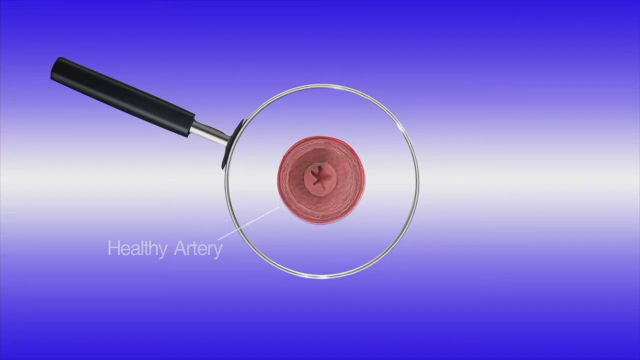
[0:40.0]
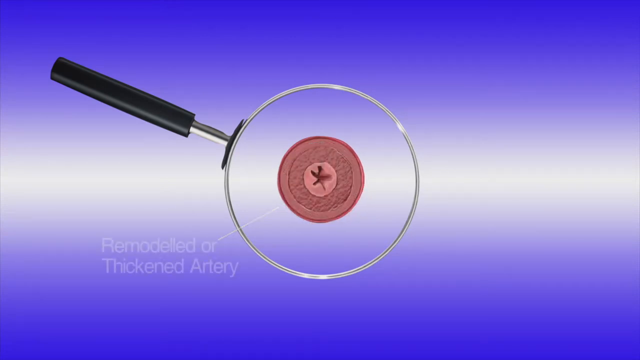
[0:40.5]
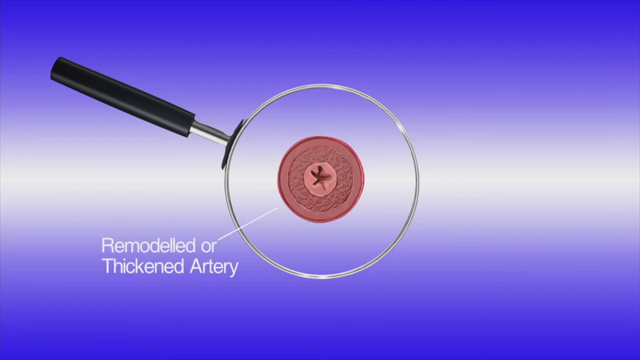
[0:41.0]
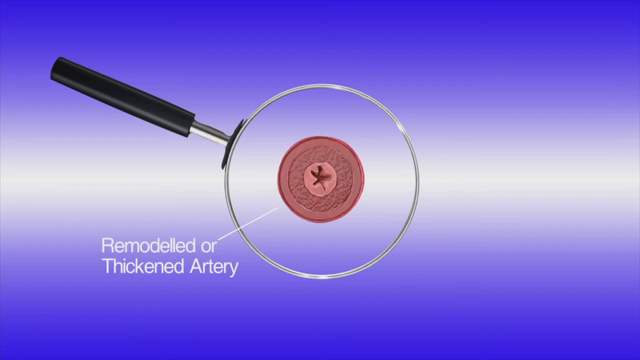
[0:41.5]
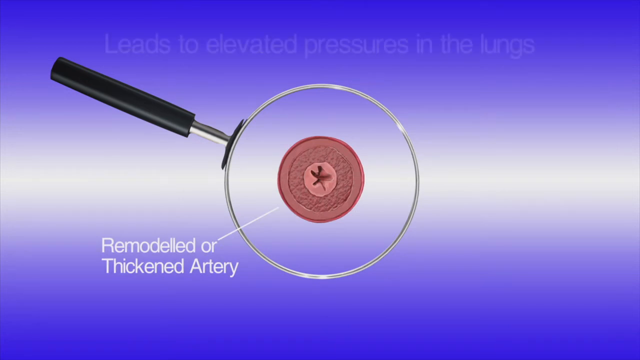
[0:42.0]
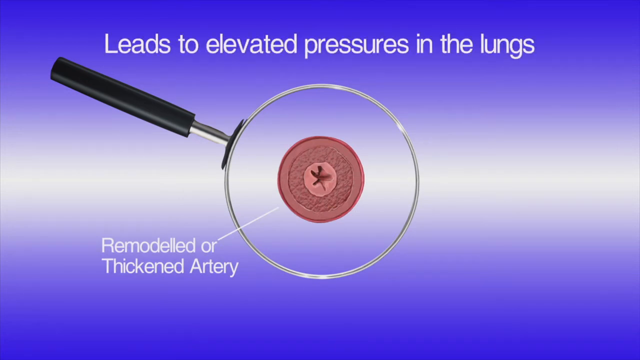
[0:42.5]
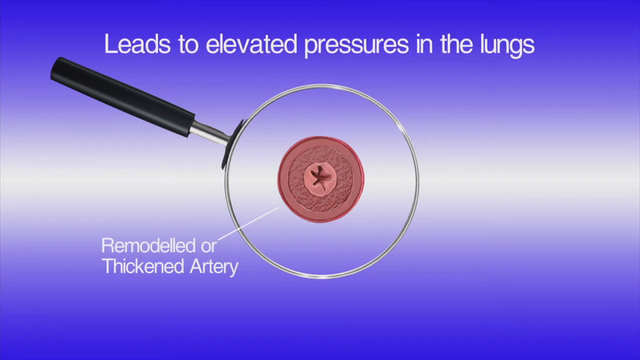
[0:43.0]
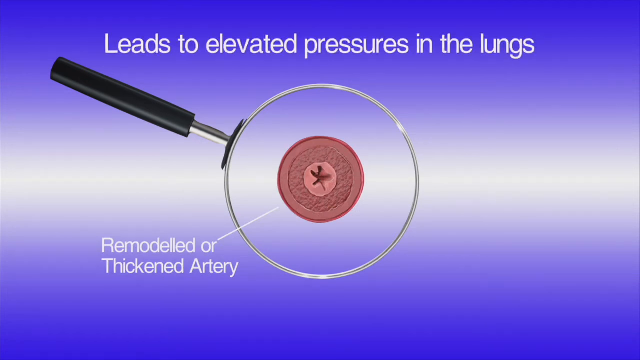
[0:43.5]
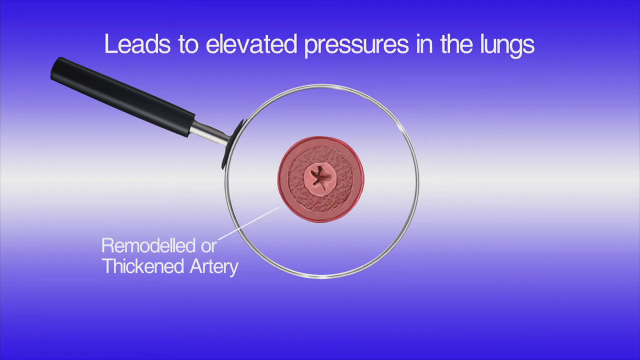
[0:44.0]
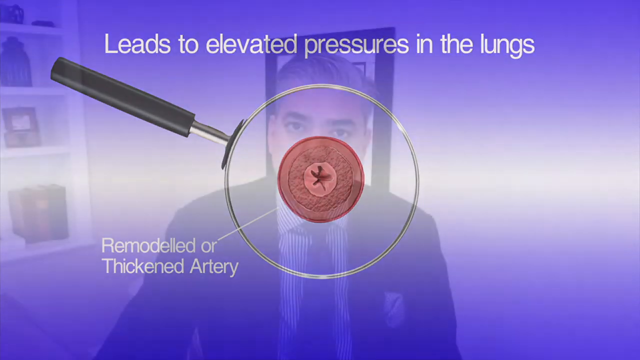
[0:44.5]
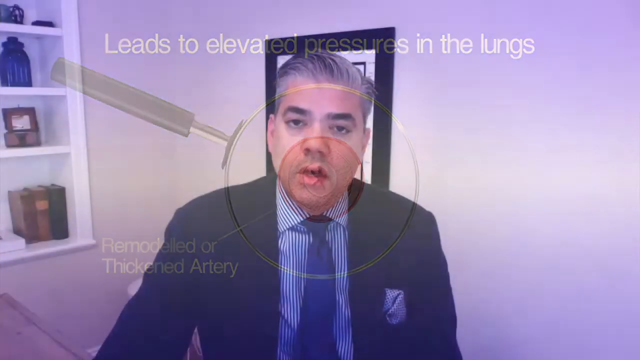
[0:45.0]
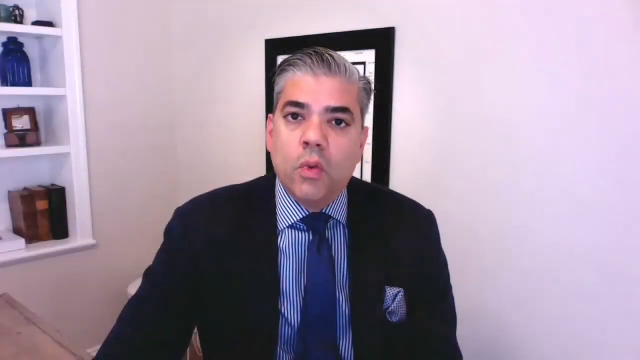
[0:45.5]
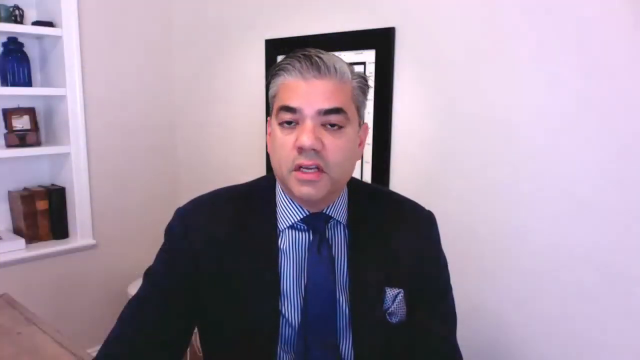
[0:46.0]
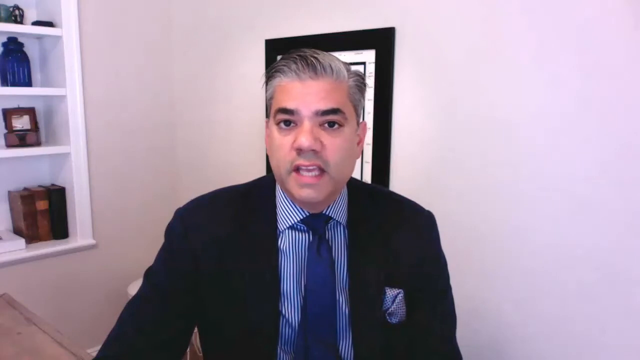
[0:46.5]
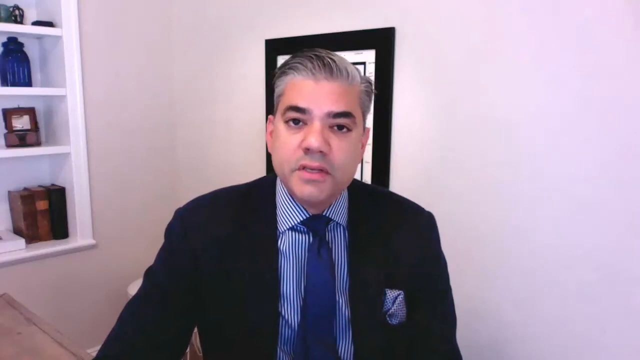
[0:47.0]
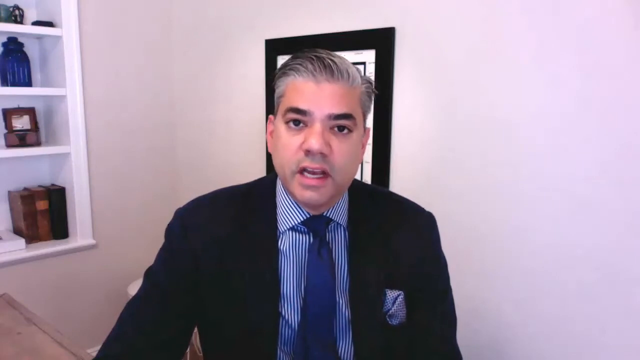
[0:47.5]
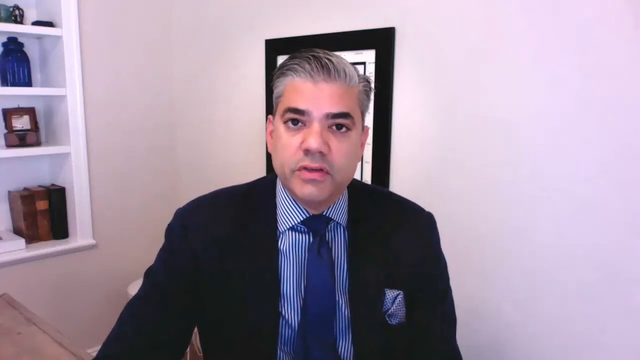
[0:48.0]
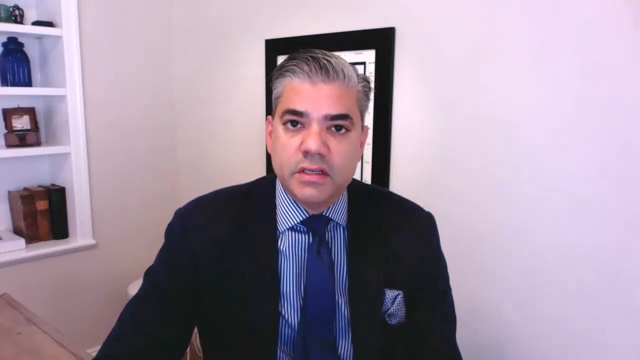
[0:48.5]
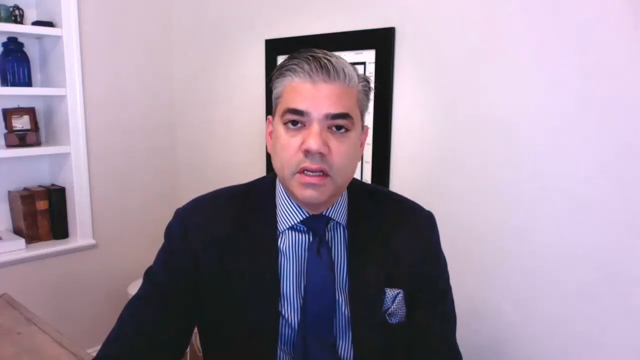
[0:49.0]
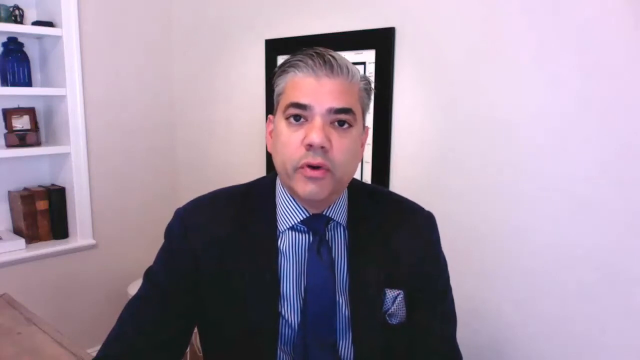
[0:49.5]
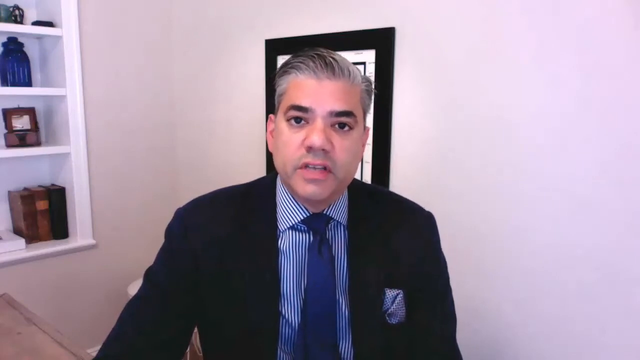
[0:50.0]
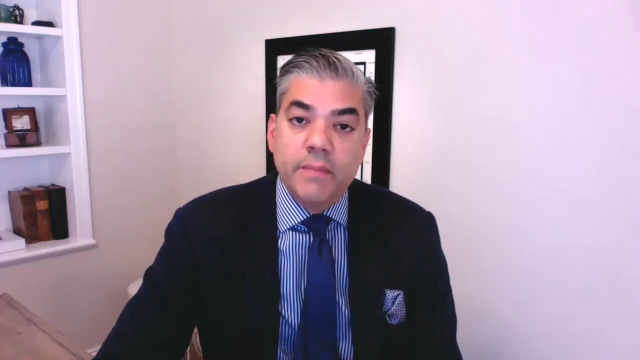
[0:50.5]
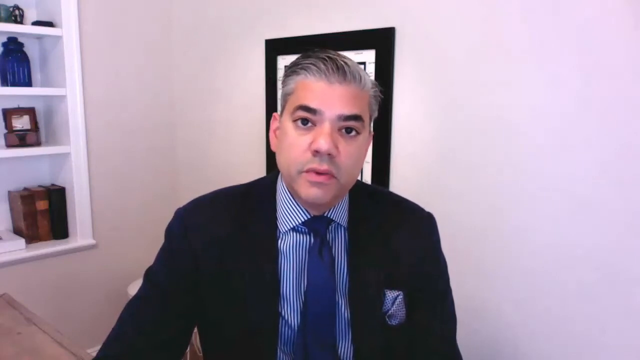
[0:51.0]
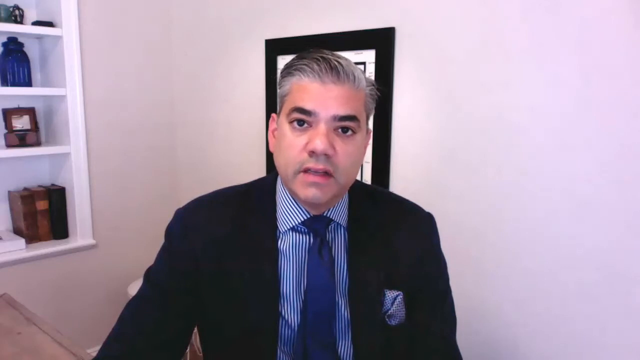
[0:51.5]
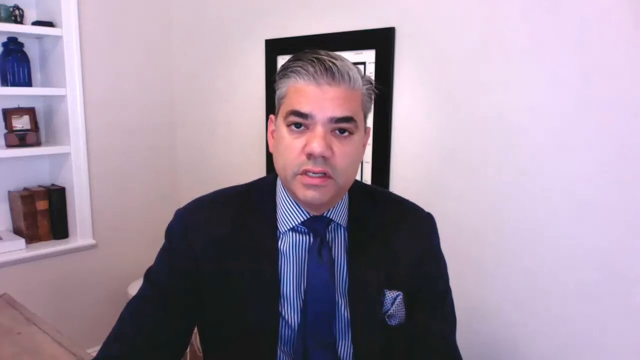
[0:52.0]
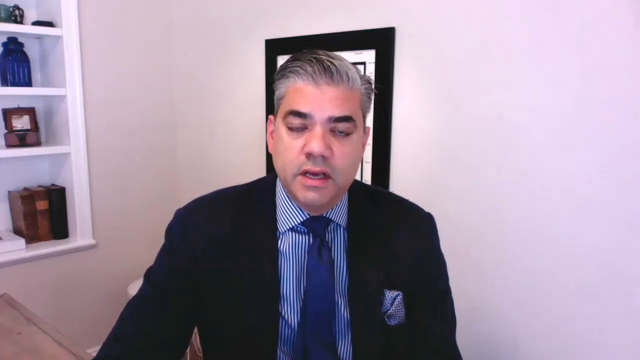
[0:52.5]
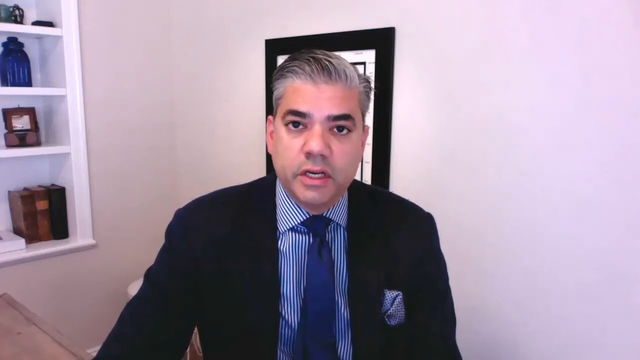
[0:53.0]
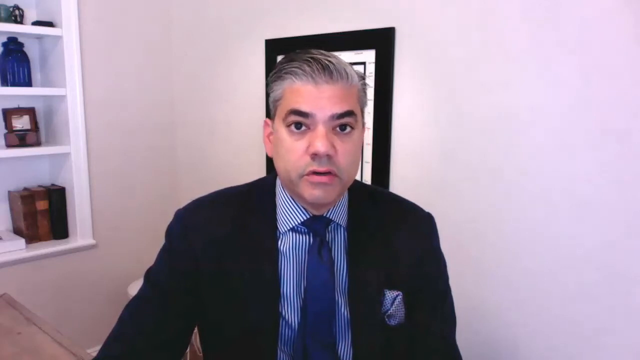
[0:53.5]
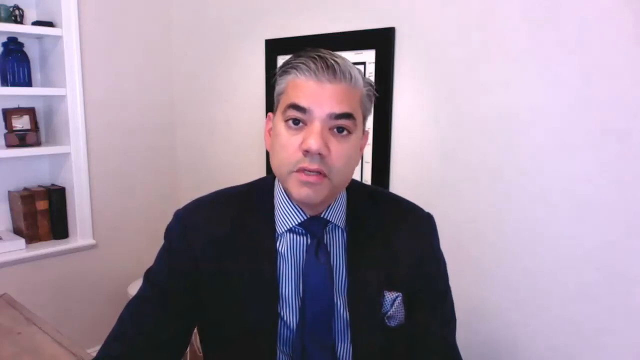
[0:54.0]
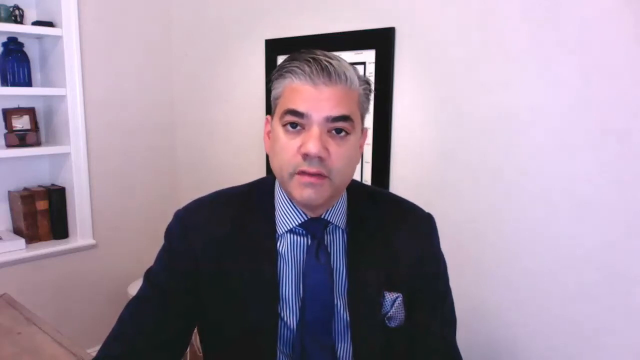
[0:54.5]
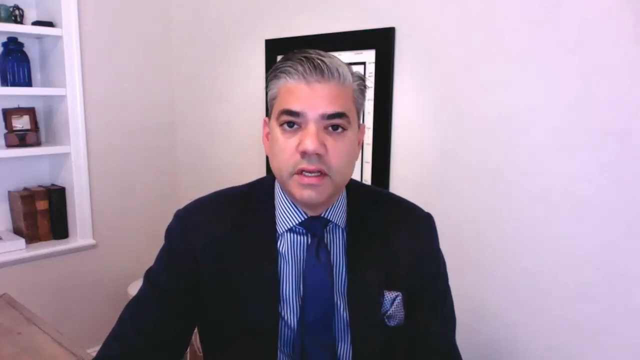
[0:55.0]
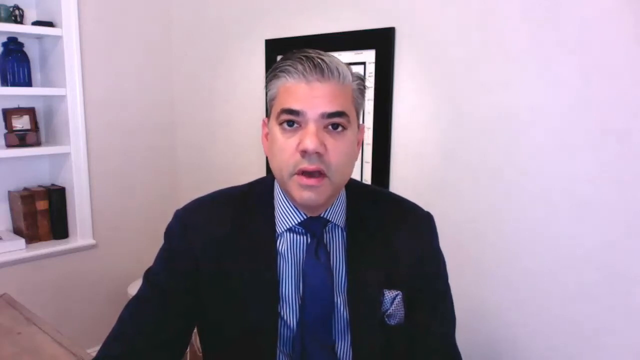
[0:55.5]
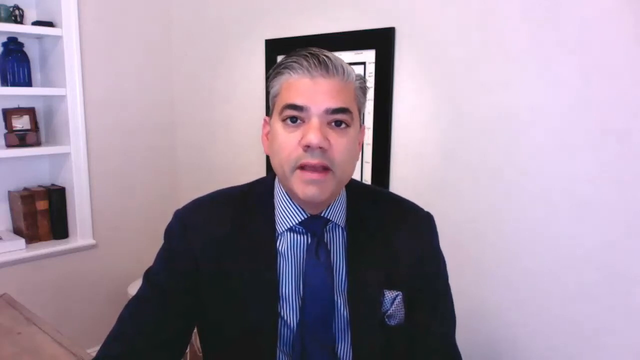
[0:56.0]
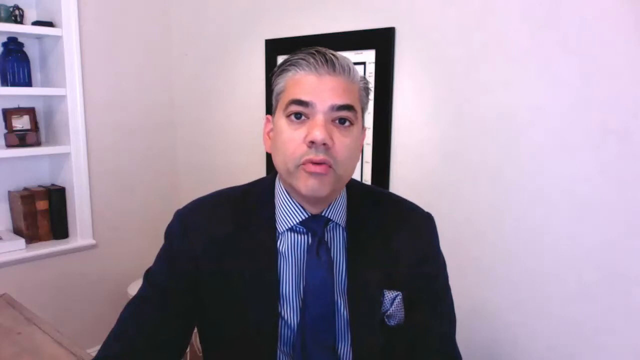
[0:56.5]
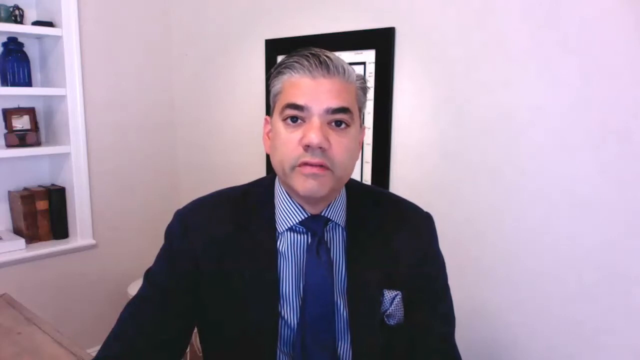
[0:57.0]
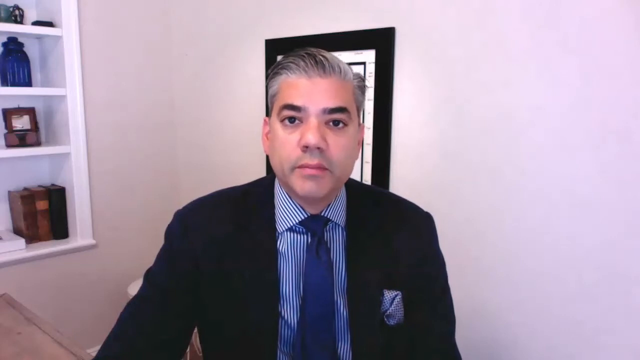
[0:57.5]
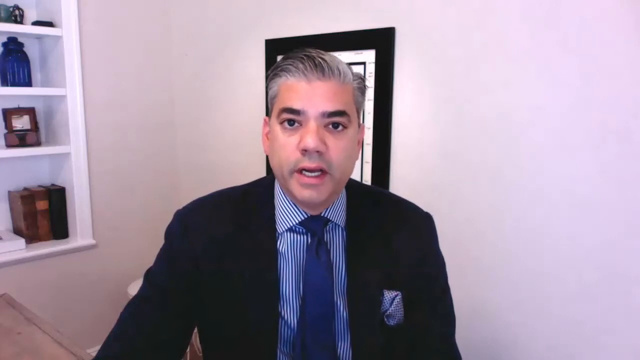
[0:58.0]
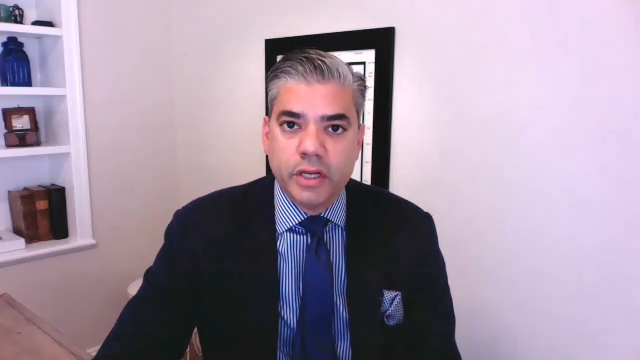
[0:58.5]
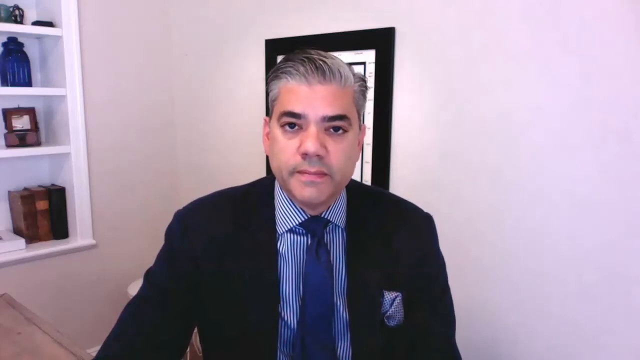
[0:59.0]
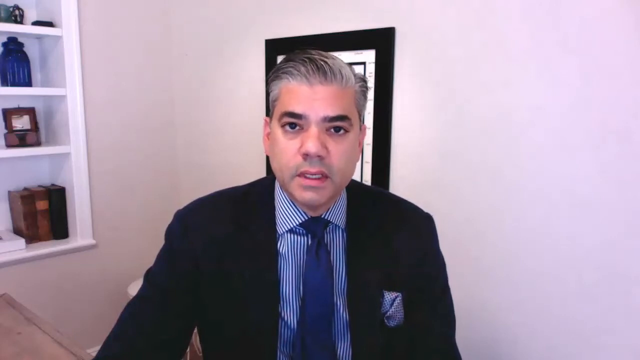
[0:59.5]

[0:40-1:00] The same image stays on screen but changes slightly: the circle, apparently a cross-section of an artery, becomes less clear and looks thicker, with the thick area on the inside of the circle less clear. The annotation changes to "remodeled or thickened artery". The blank space in the middle of the circle is smaller, so the artery walls look thickened. Along the top, in larger white writing, is what appears to read "leads to elevated pressures in the lungs". The video then transitions back to the man, still in the same outfit of suit, blue shirt, blue tie and pocket square, who continues talking and nods his head as he speaks.